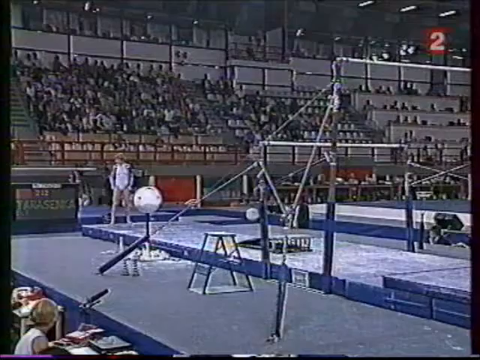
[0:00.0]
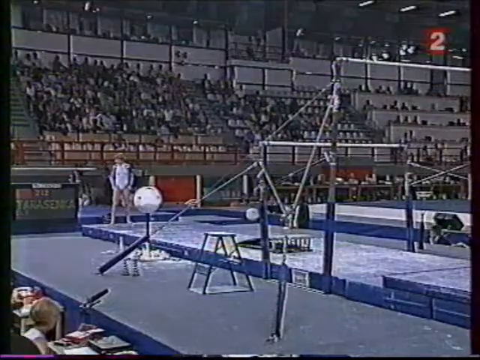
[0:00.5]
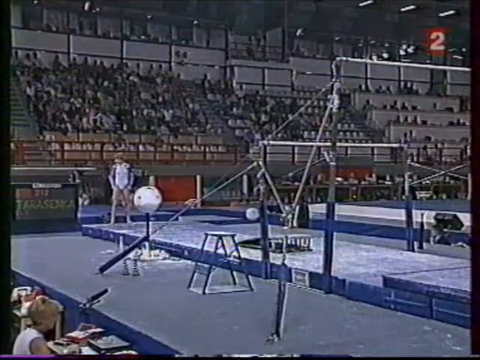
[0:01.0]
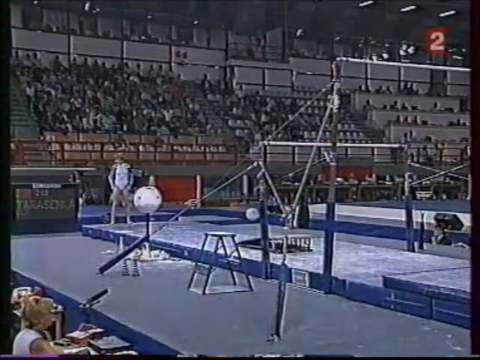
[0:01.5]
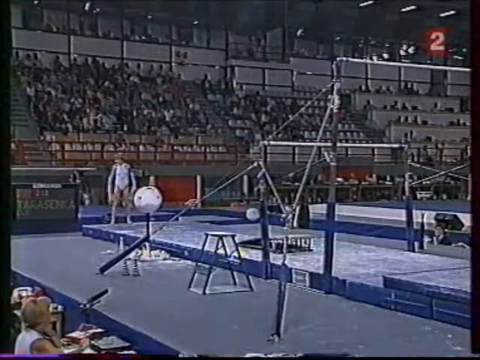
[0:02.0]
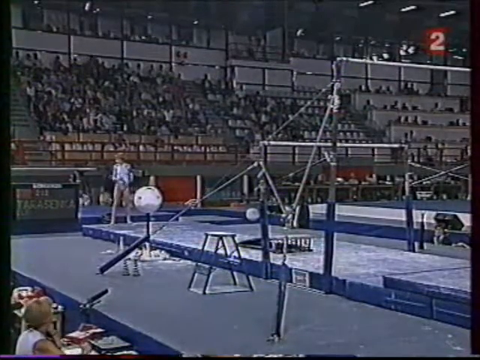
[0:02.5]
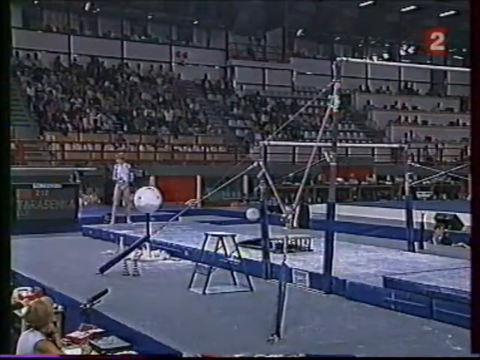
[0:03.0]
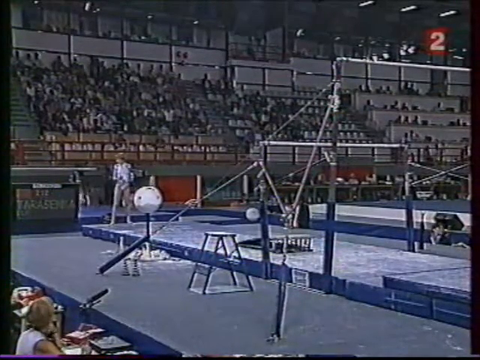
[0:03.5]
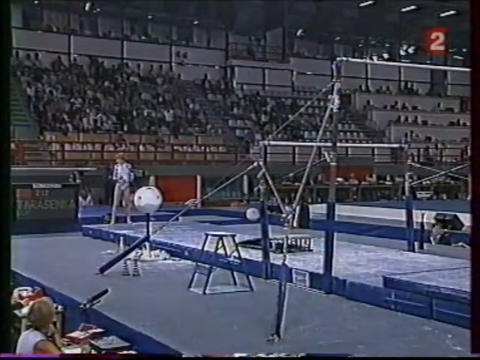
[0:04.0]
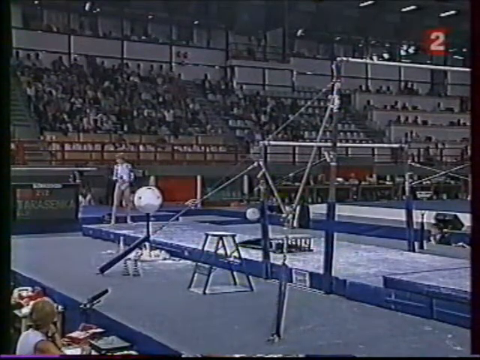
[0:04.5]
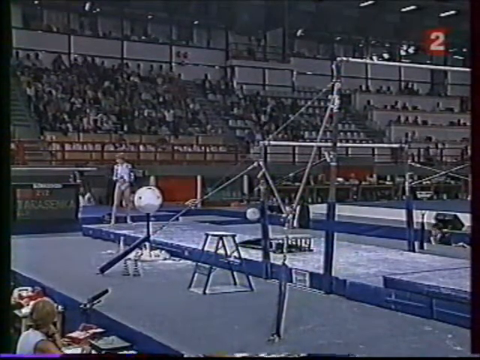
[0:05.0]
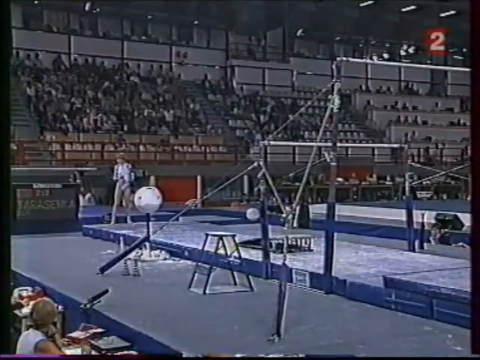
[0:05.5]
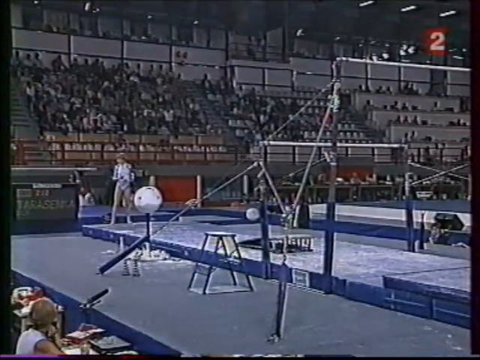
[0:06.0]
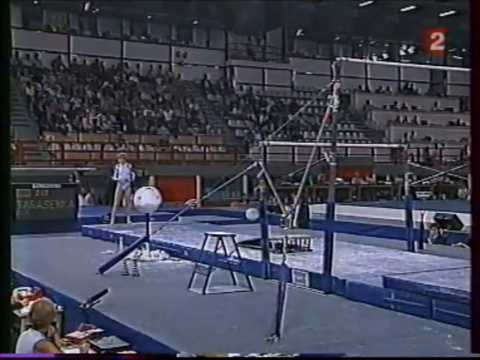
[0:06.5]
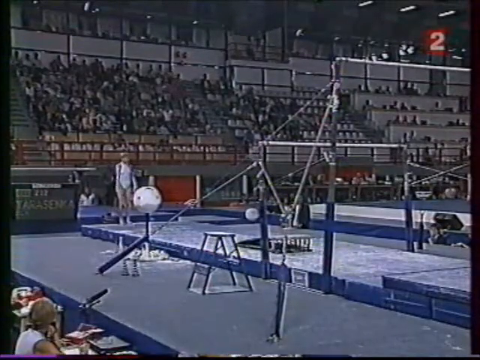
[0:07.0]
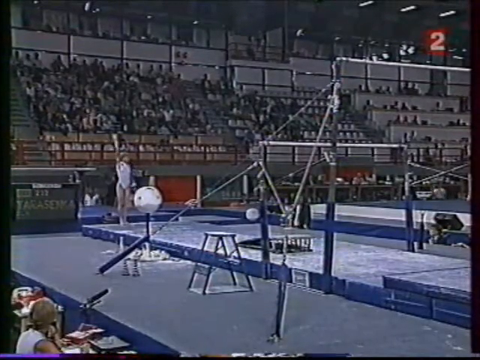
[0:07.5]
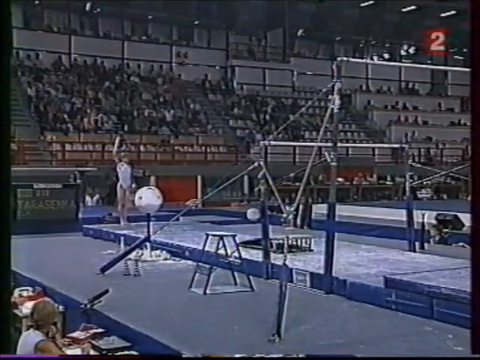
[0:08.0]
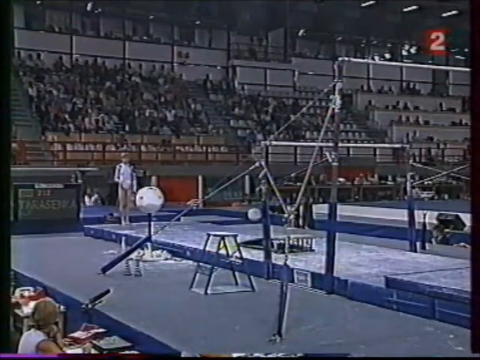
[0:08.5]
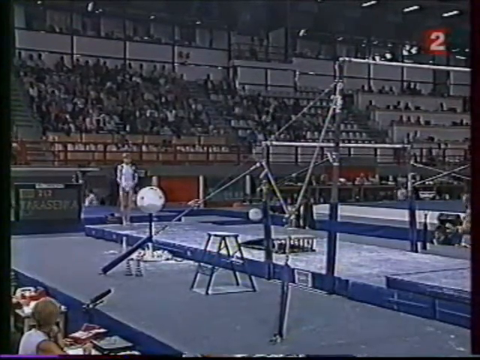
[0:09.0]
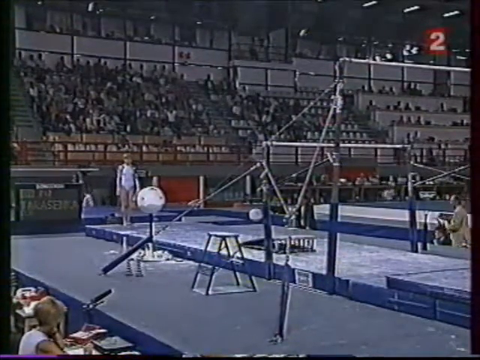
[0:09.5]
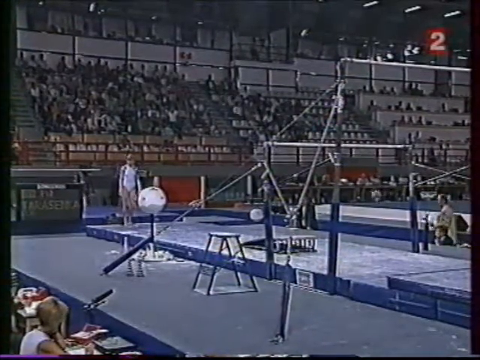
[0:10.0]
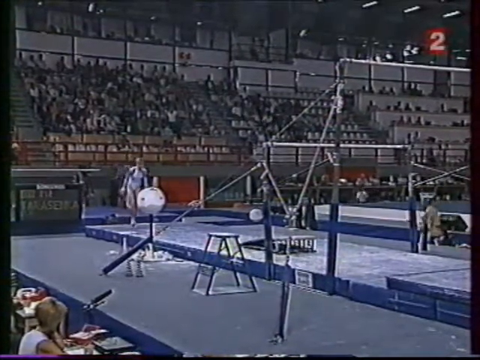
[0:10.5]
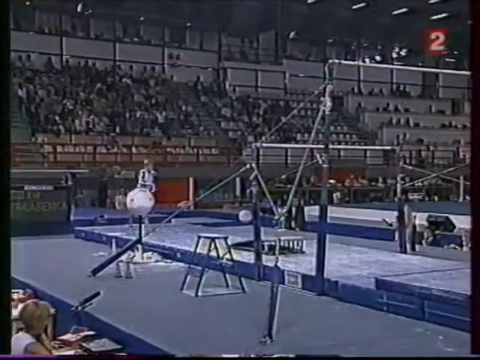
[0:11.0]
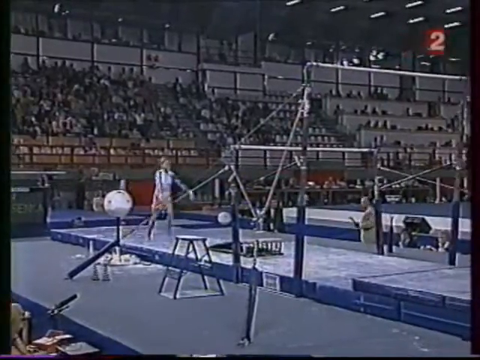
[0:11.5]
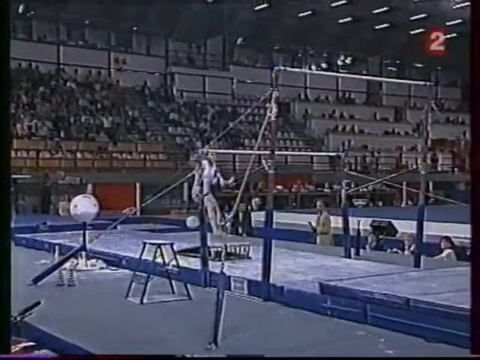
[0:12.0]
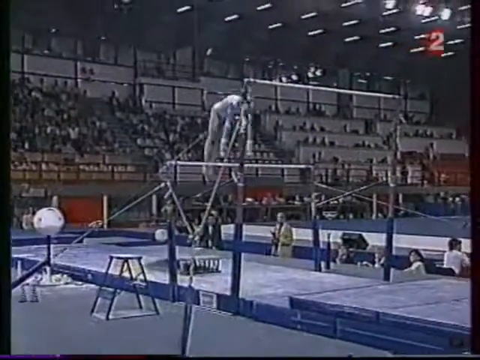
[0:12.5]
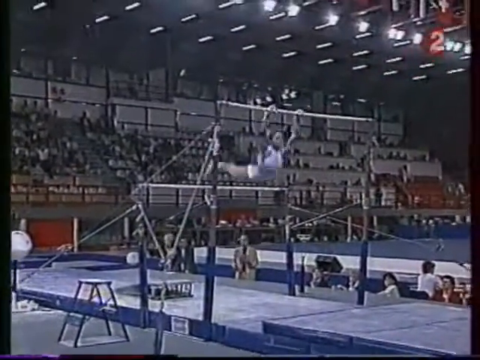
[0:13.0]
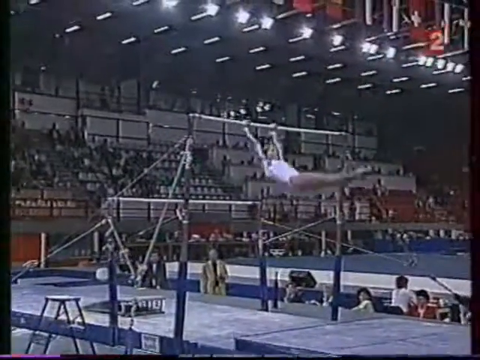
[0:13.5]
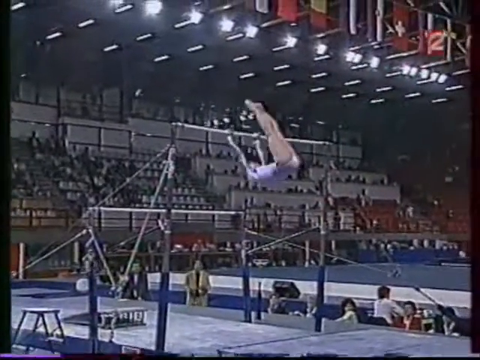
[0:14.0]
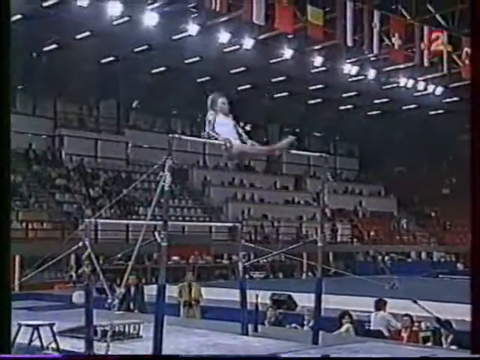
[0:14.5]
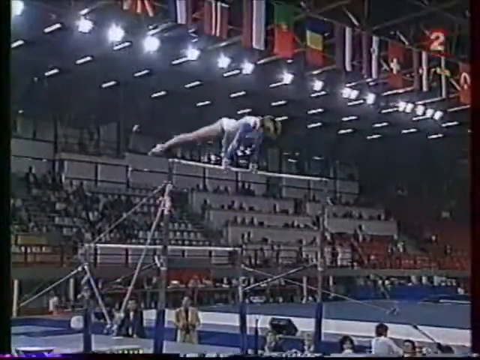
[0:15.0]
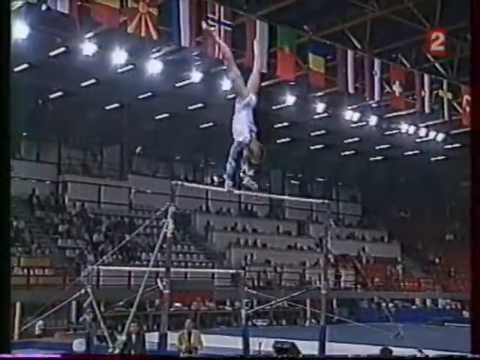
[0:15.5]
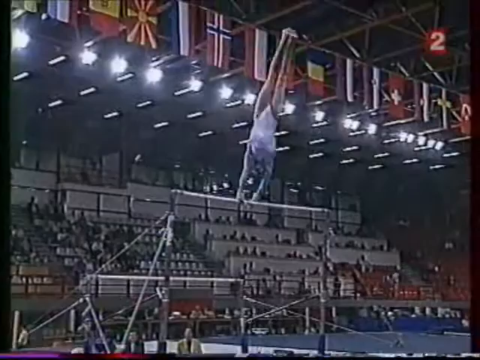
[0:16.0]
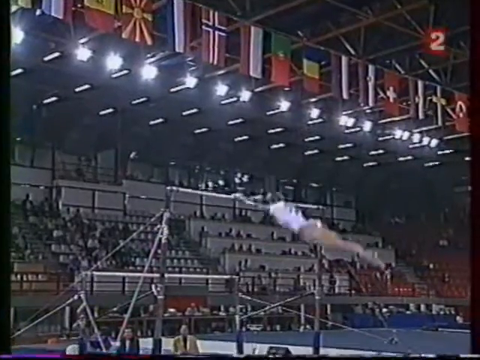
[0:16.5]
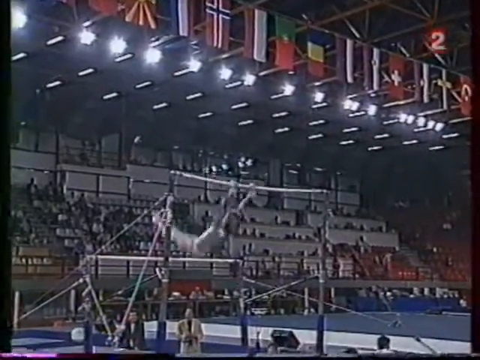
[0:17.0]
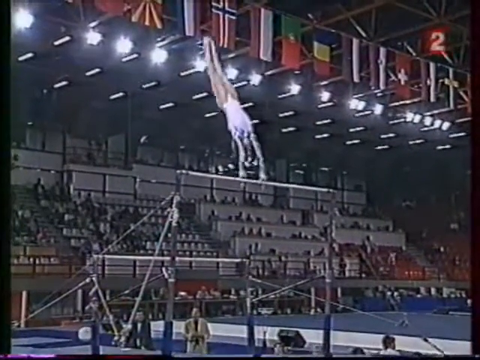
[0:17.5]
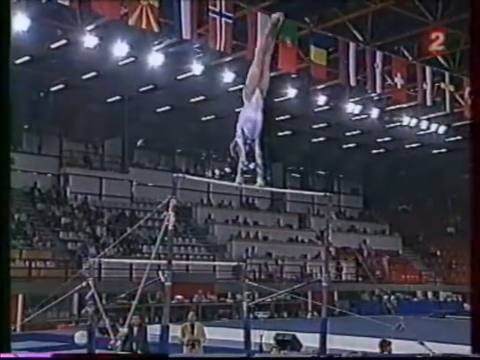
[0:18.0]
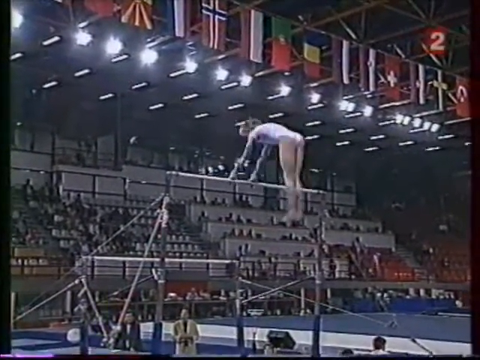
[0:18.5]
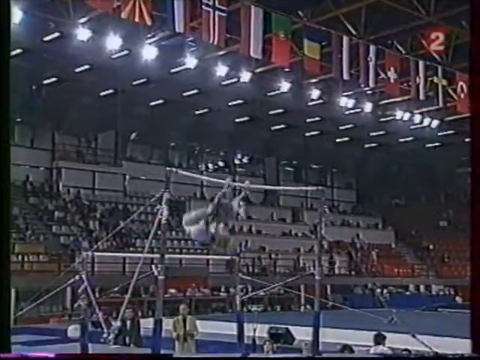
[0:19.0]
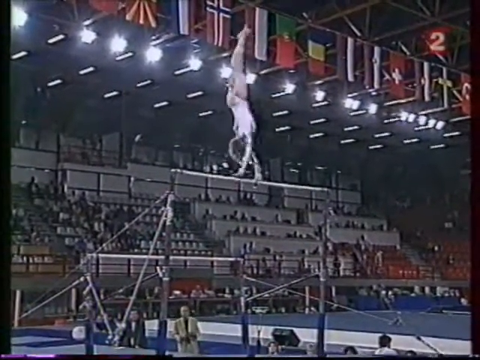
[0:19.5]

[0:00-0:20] The footage appears to be old, probably from the early 90s or maybe the 80s, showing a gymnastics event. A girl in a white singlet looks as though she is about to perform; she looks off to the side, to the left, and her name appears to be Tarasenka. In the back are stands, apparently about eight to ten, that look pretty full for the most part. Above them are more booths on a tall white wall, with a couple of wood frames around each of the white panels. She seems to be listening, maybe to a coach giving tips or advice off to the side. Below this are apparently media, or maybe judges. A bald-headed man appears to have some kind of microphone sticking out to the side. She rubs her hands together and, after an announcement, puts her arms straight up in the air. She starts running with her arms out to the side, jumps on the springboard, flips up over the low bar and grabs the high bar. She gains a little momentum, rocking forward about a half circle with her legs laid completely out in front of her and her toes pointing forward. She briefly does a sort of split, then does a half turn, using her hands to turn herself in the opposite direction. She rotates around one more time, tucks her legs, comes up and turns twice.